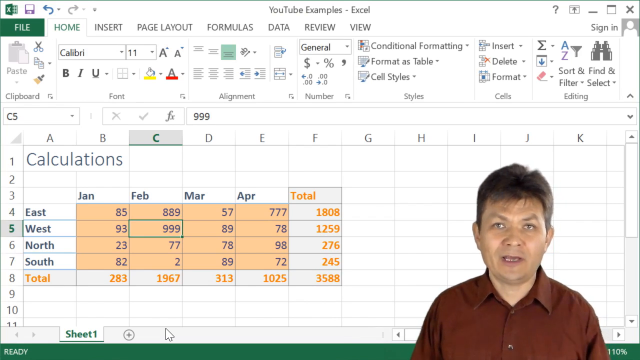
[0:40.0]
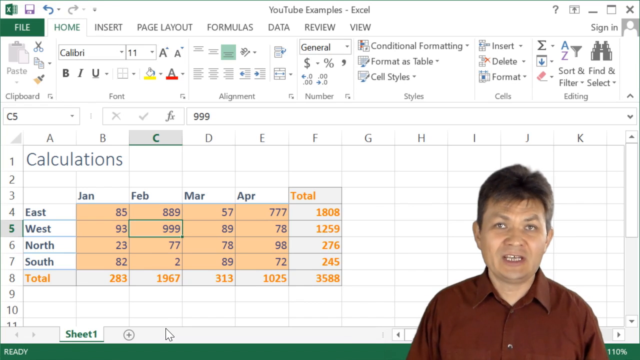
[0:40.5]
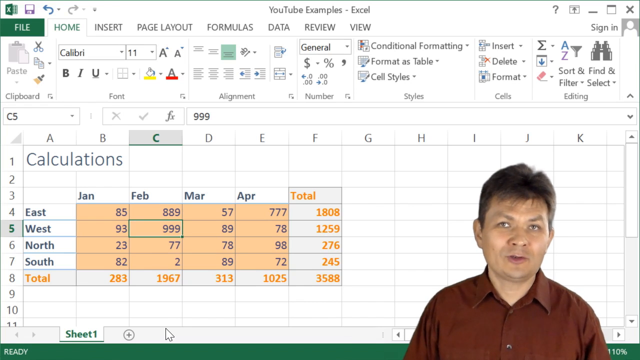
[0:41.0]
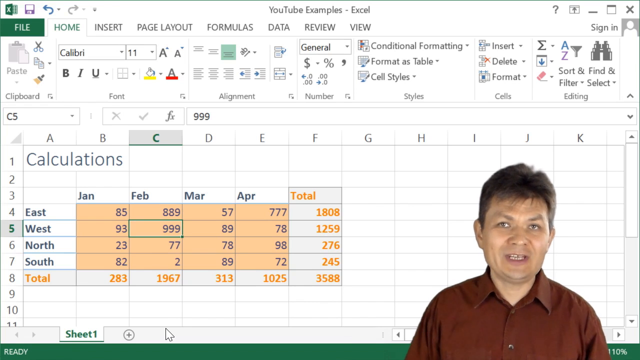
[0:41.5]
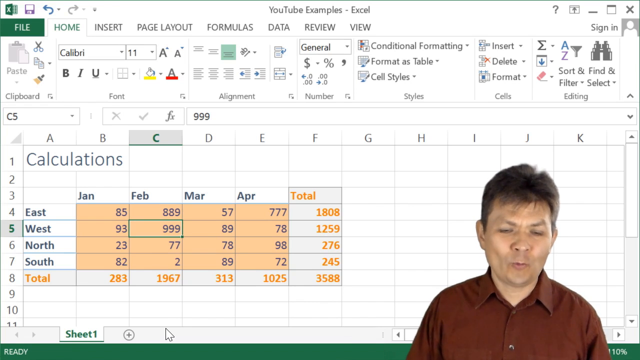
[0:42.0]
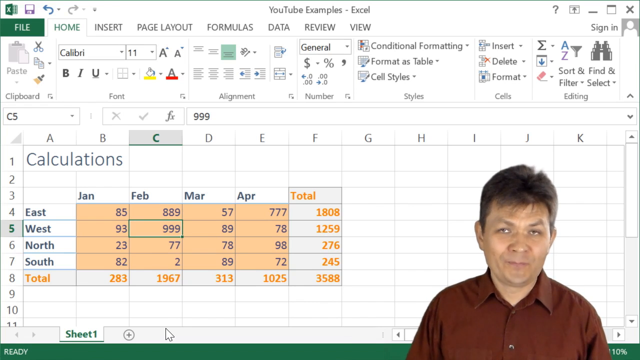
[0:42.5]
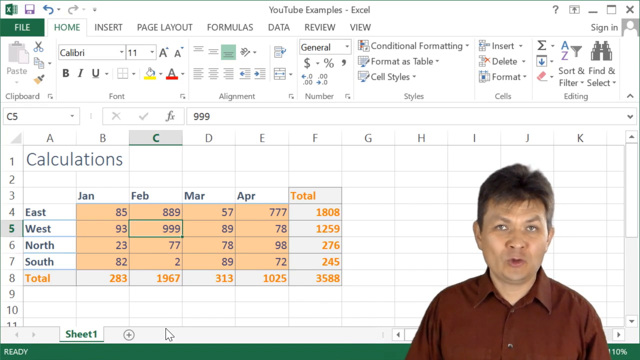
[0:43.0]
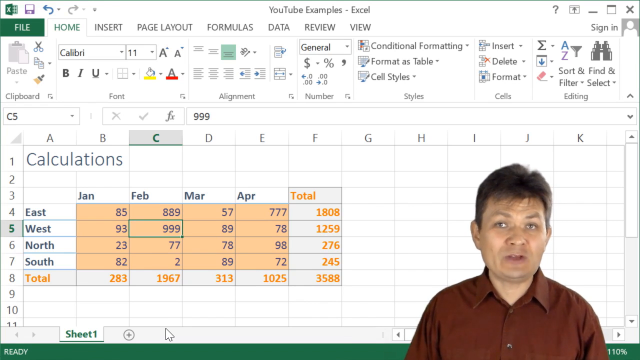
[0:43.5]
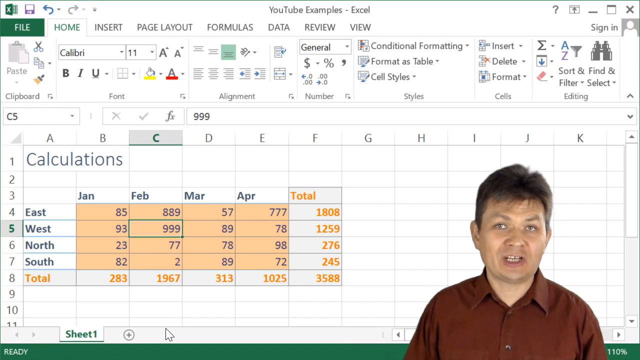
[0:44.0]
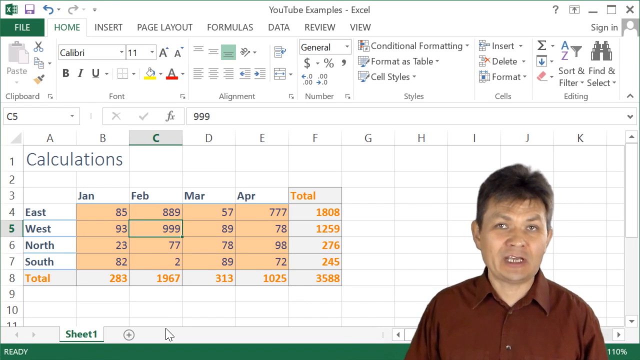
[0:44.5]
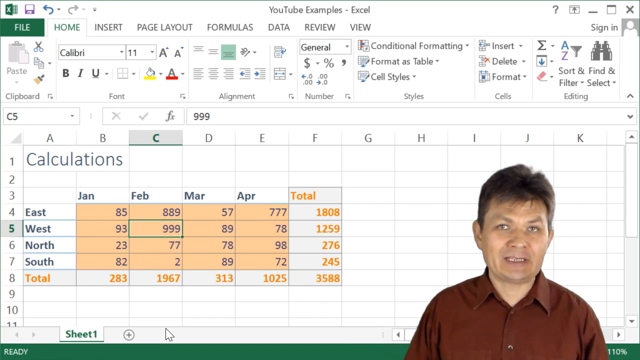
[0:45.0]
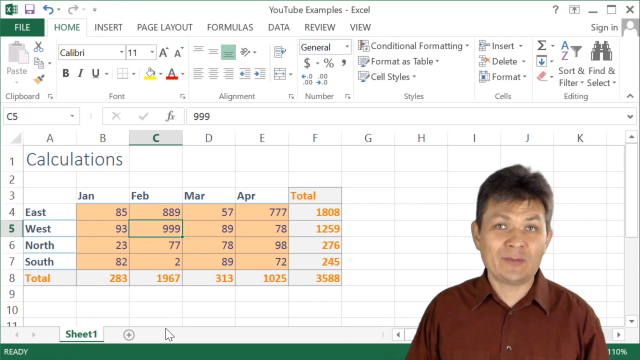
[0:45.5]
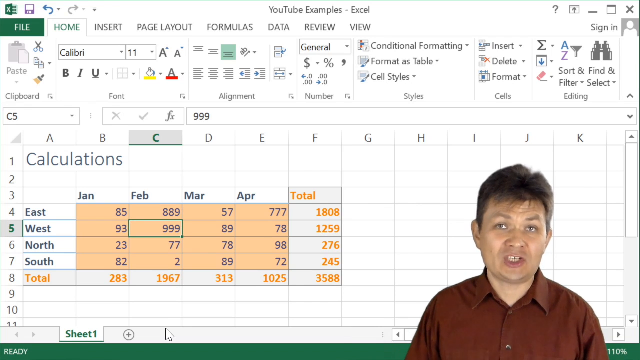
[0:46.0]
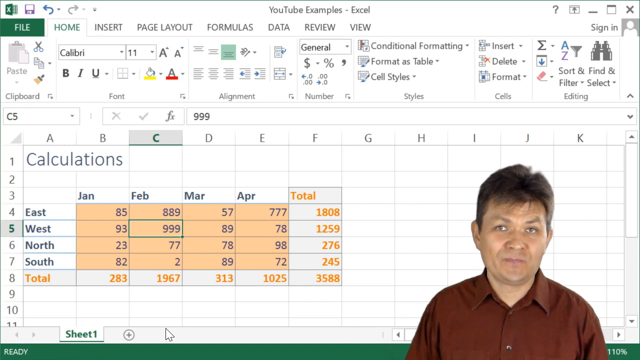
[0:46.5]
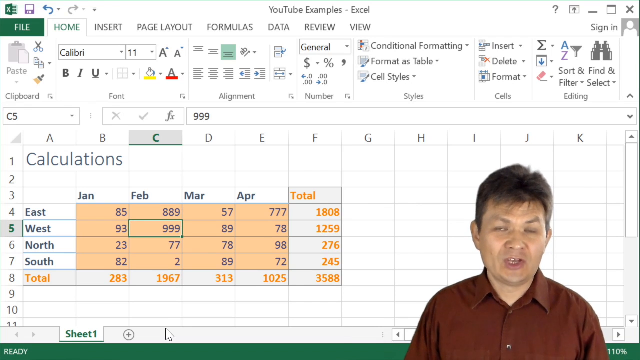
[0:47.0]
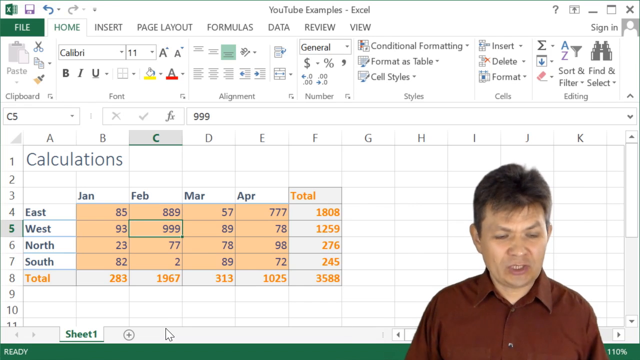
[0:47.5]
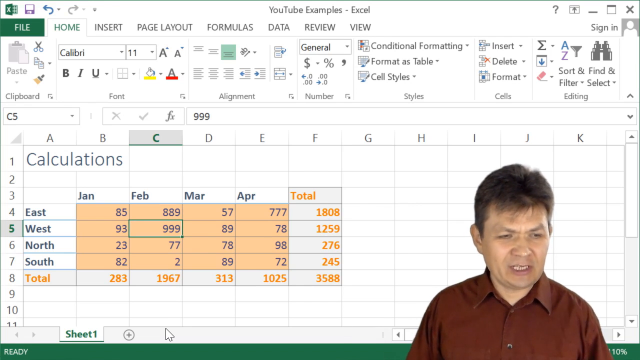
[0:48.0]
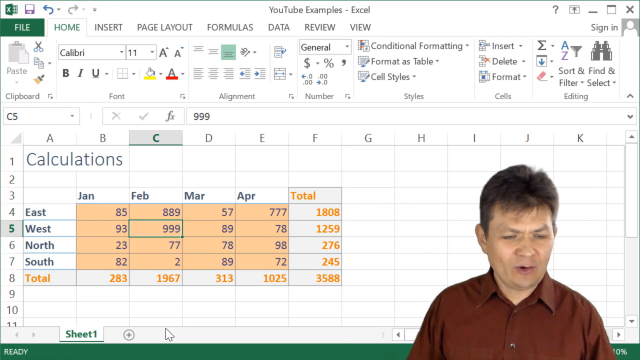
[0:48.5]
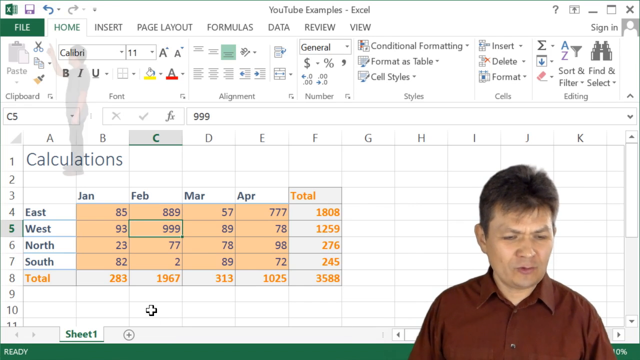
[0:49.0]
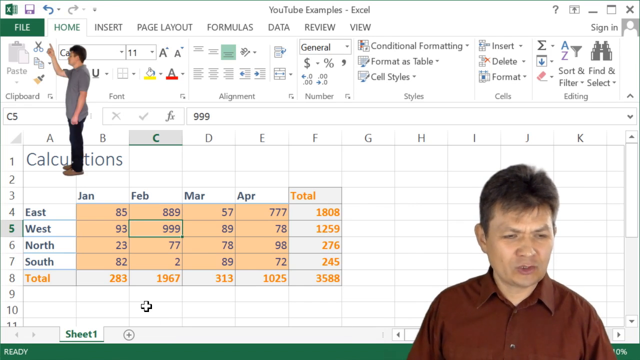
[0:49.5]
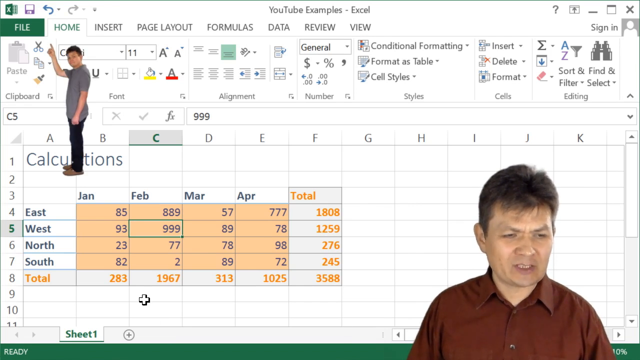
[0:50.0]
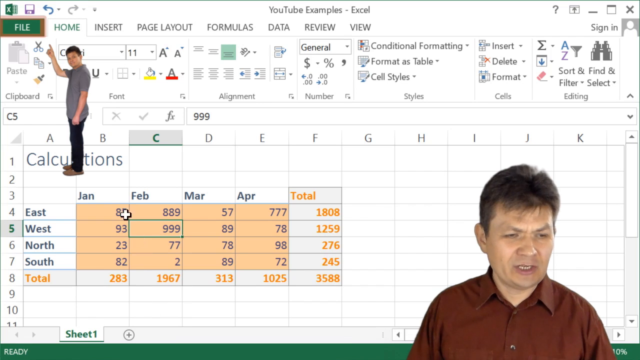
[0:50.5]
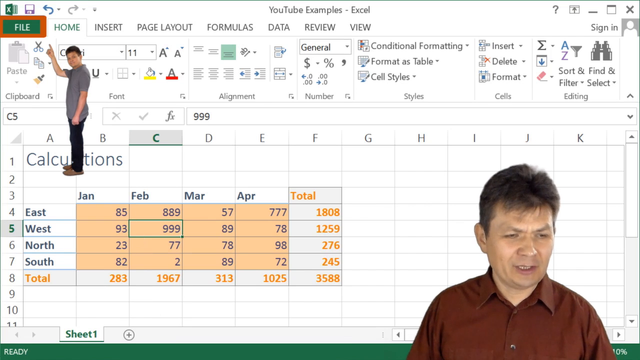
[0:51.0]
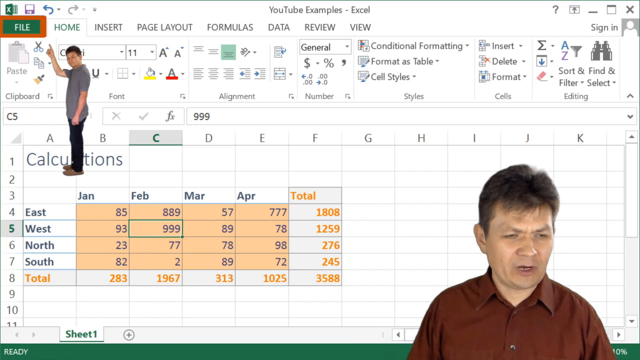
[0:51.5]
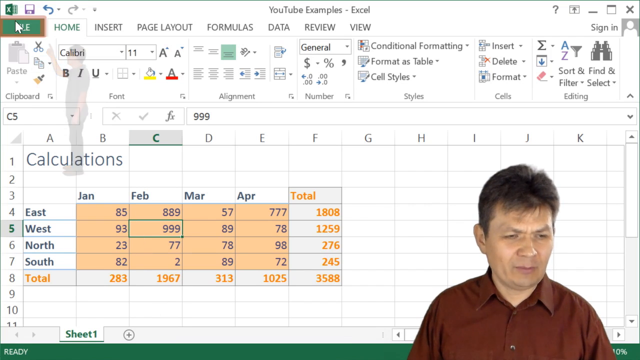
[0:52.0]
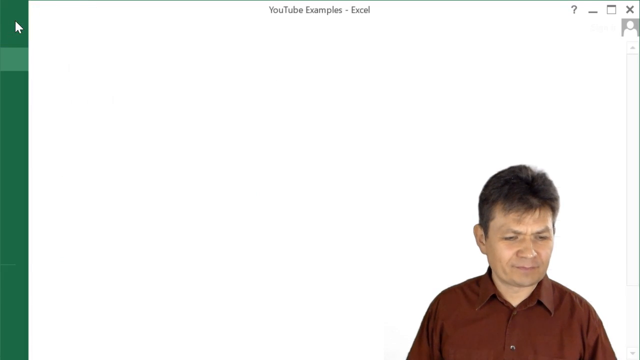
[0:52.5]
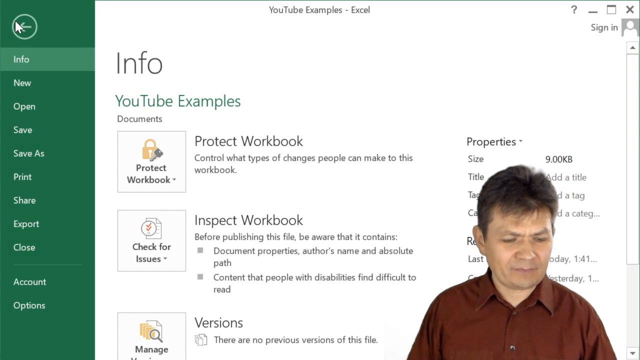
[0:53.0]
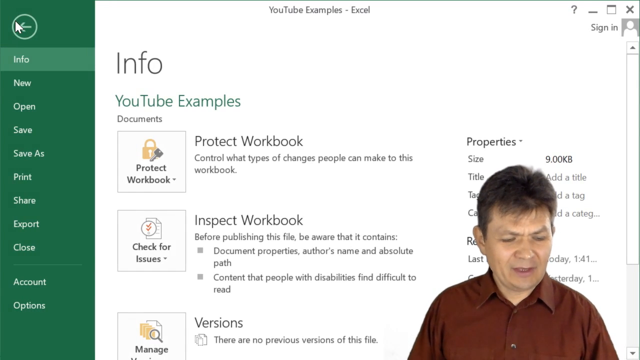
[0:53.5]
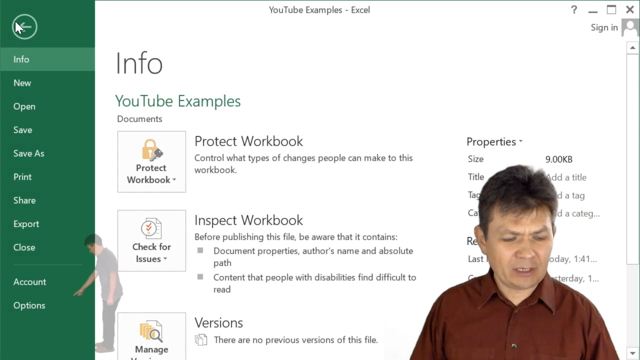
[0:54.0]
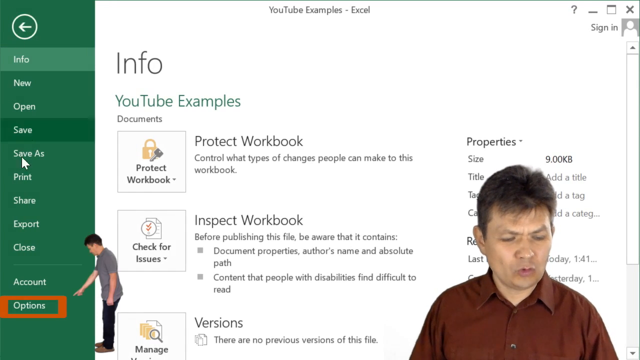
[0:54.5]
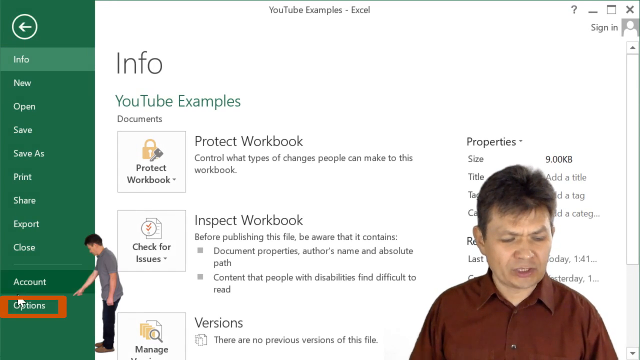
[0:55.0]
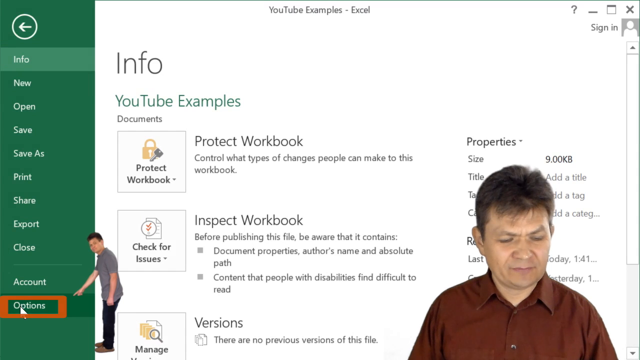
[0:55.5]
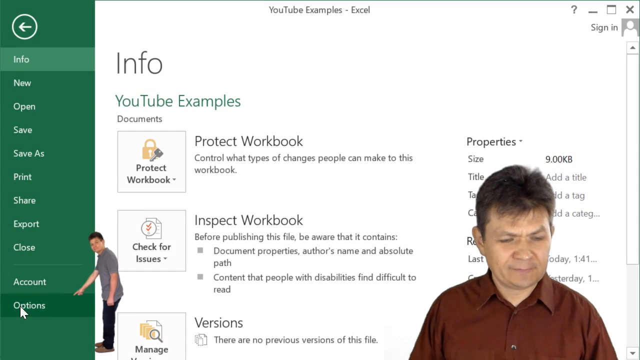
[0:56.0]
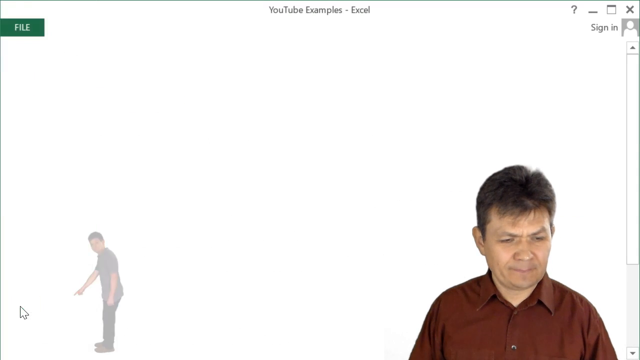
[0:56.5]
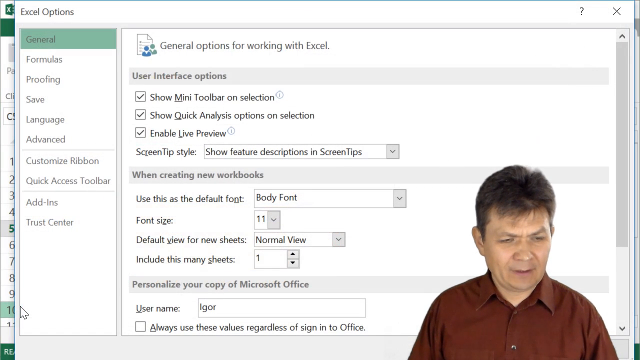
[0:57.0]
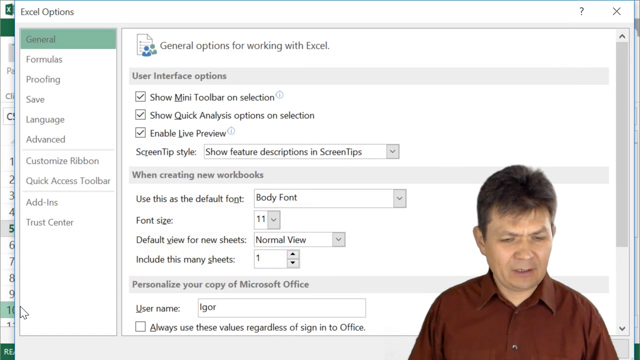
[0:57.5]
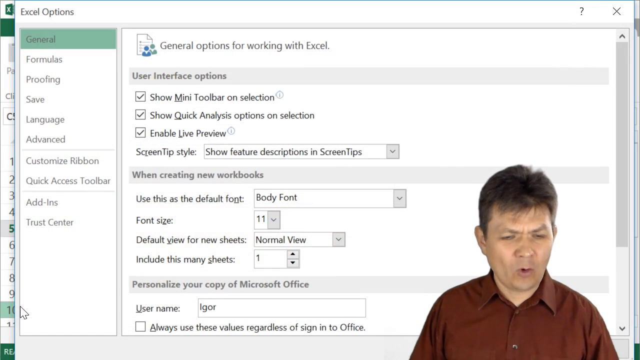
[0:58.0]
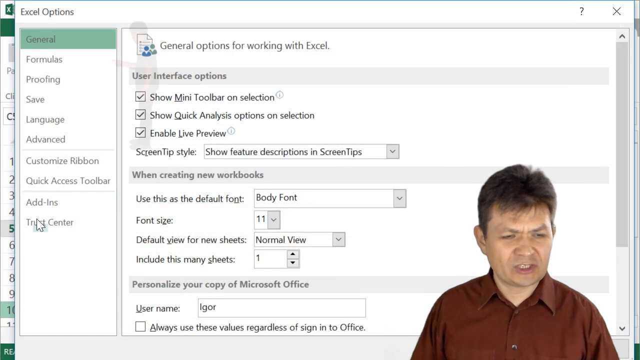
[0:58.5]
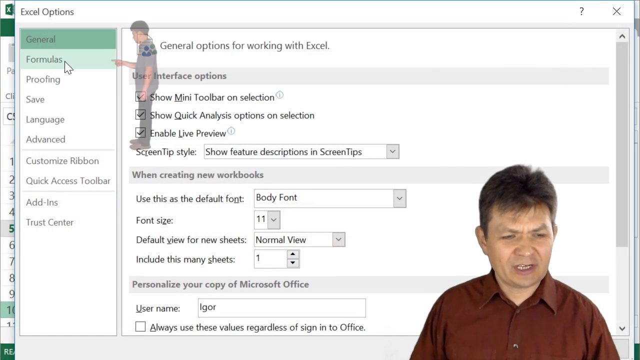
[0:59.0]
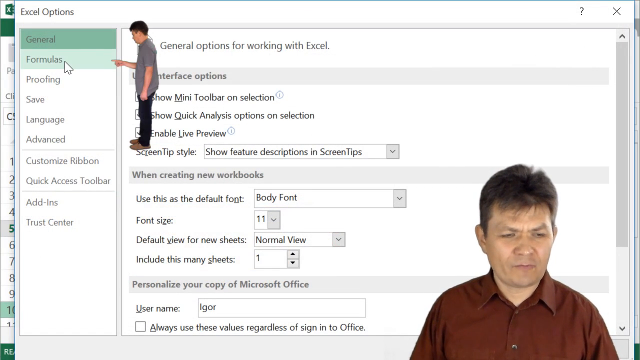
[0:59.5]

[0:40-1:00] The automatic calculation setting in Microsoft Excel is reached through Files, then Options, then Formulas.